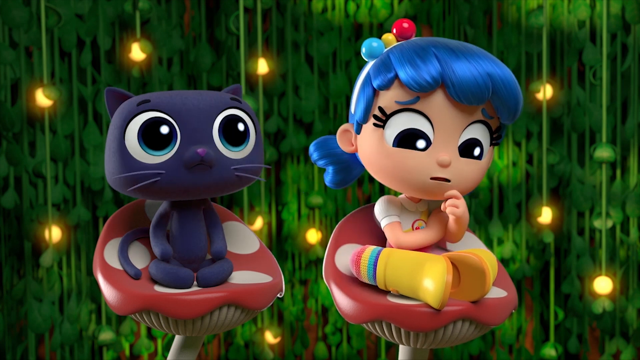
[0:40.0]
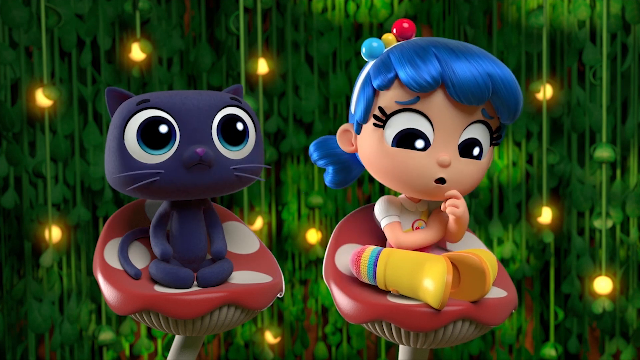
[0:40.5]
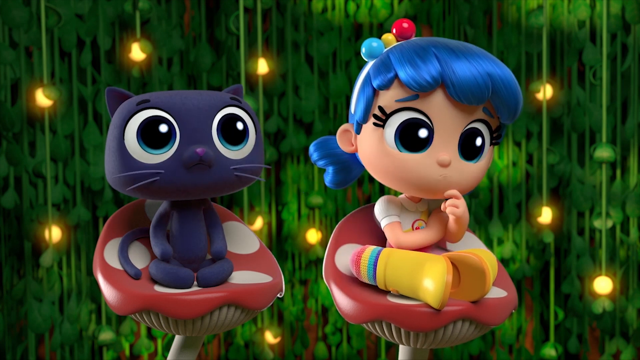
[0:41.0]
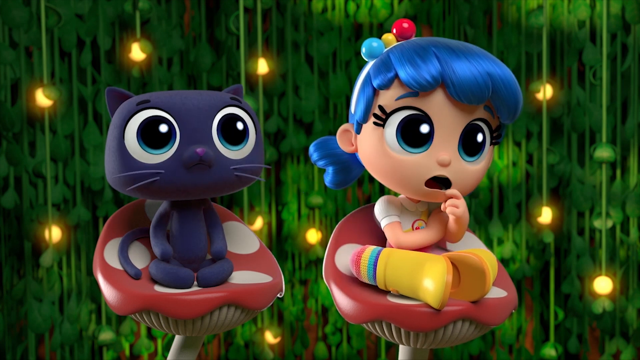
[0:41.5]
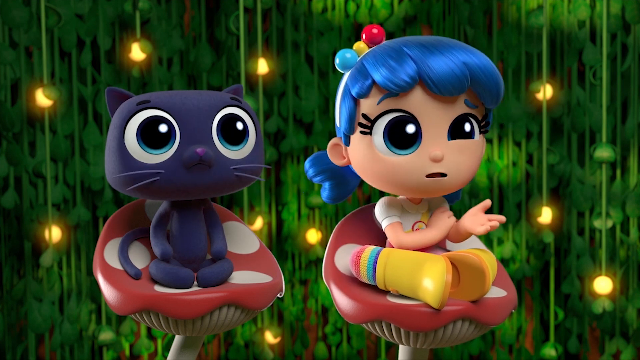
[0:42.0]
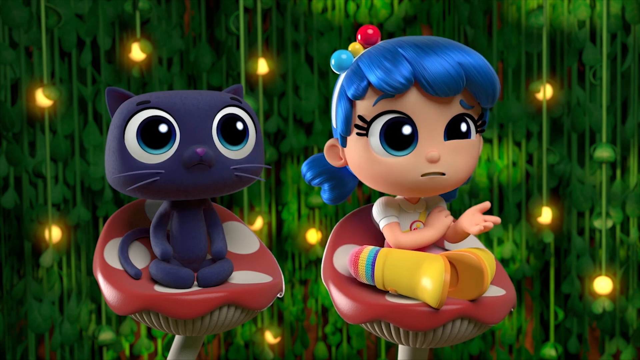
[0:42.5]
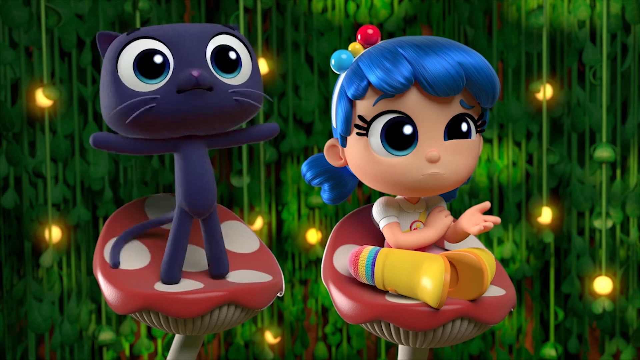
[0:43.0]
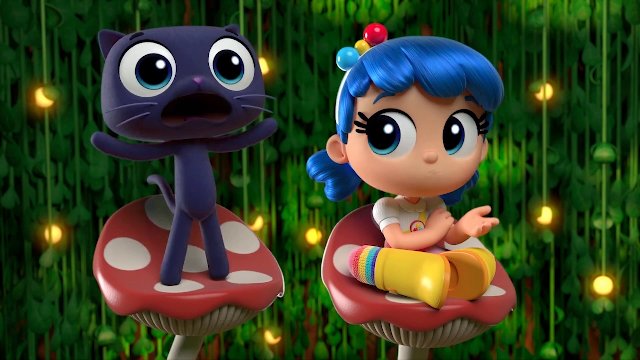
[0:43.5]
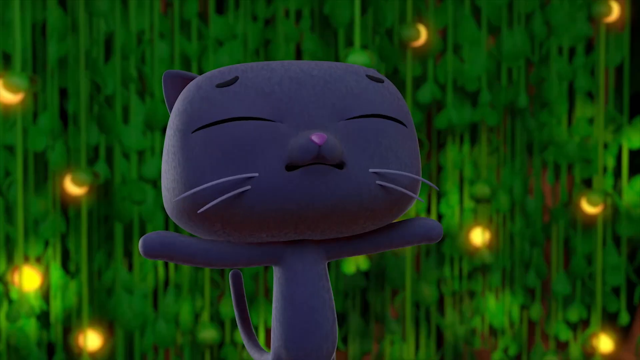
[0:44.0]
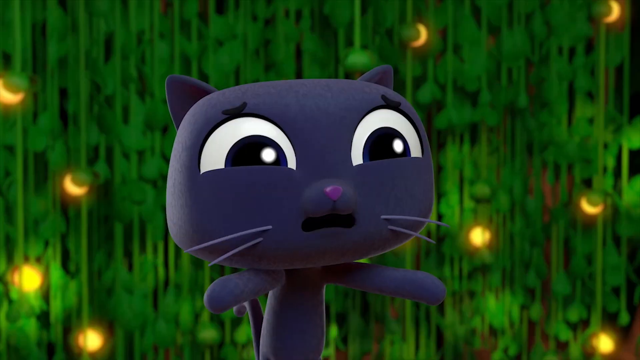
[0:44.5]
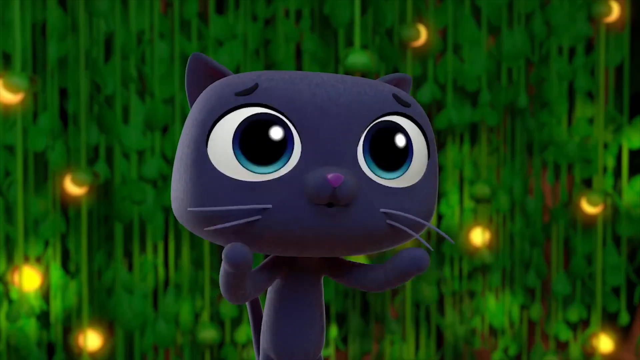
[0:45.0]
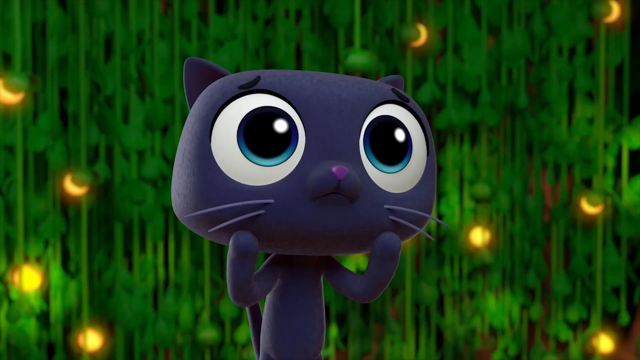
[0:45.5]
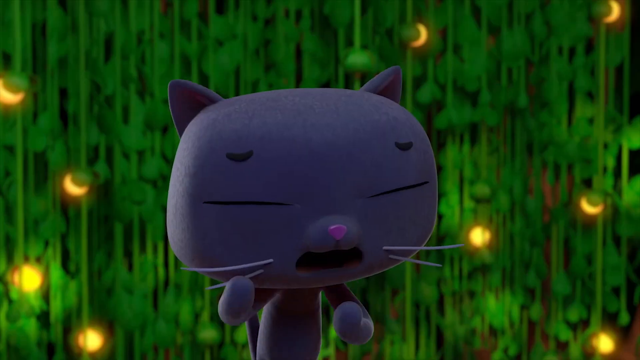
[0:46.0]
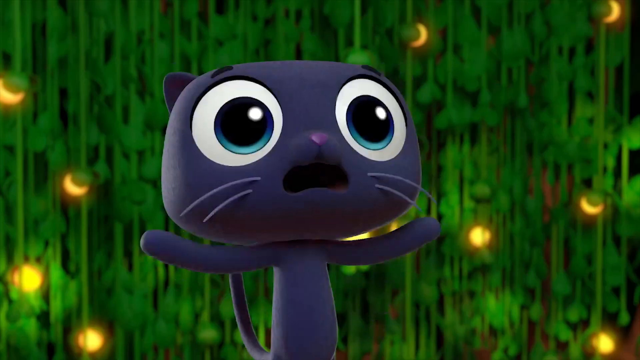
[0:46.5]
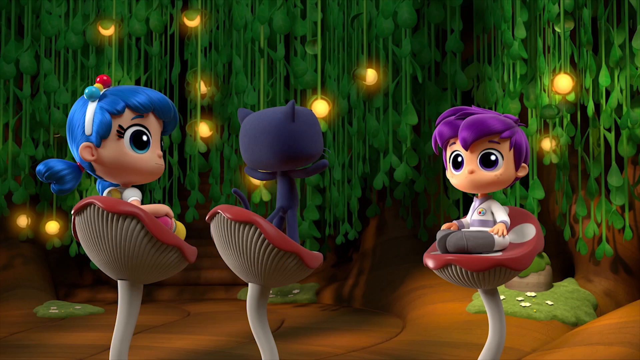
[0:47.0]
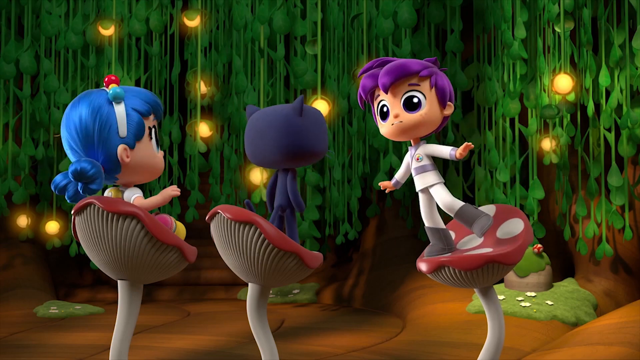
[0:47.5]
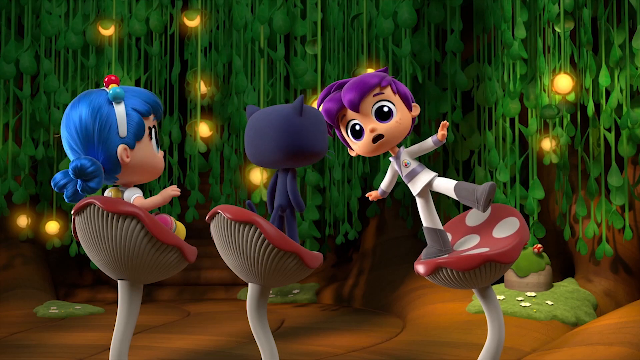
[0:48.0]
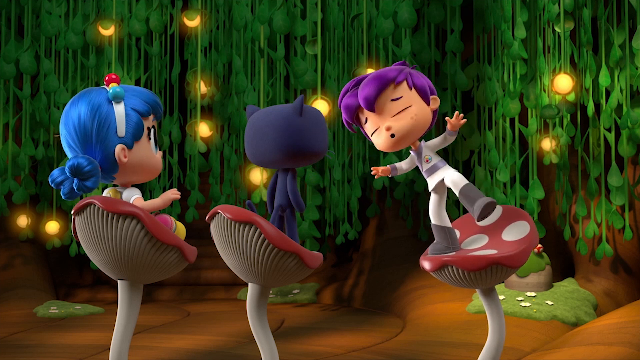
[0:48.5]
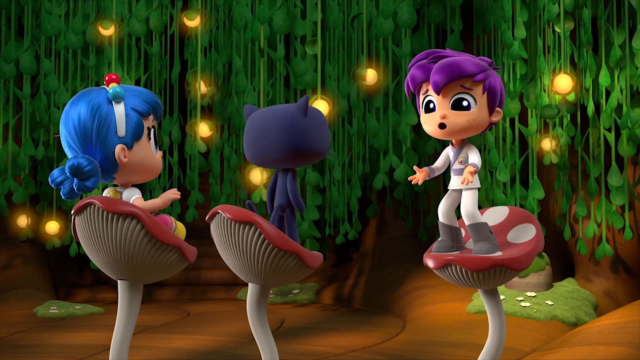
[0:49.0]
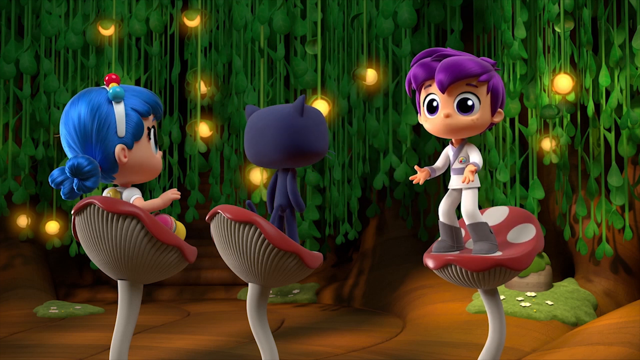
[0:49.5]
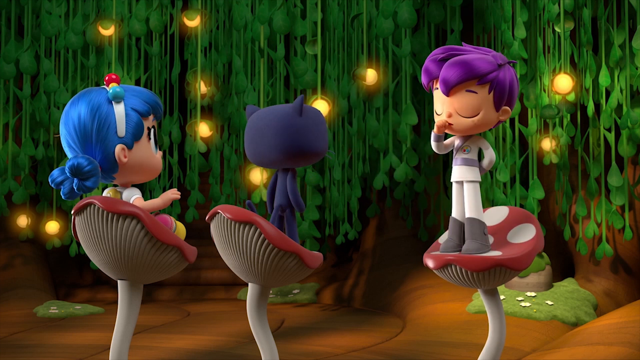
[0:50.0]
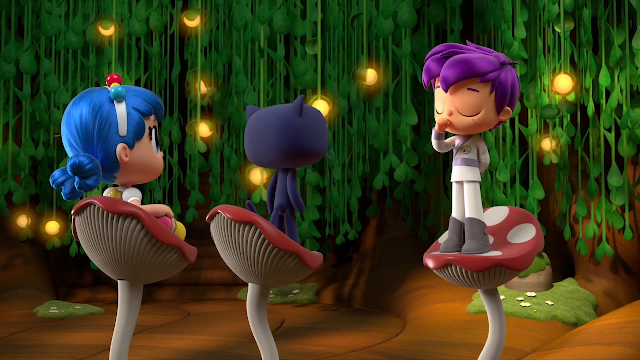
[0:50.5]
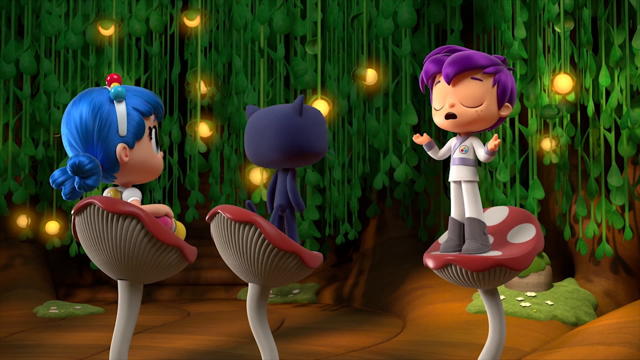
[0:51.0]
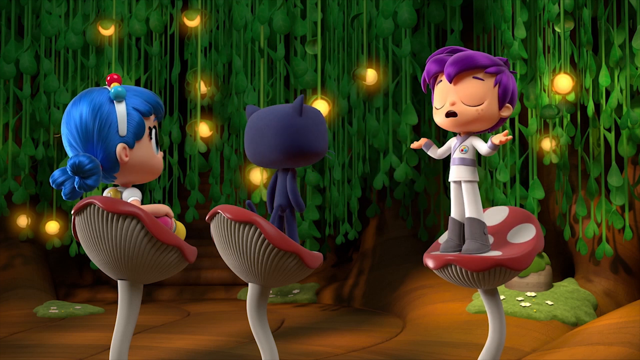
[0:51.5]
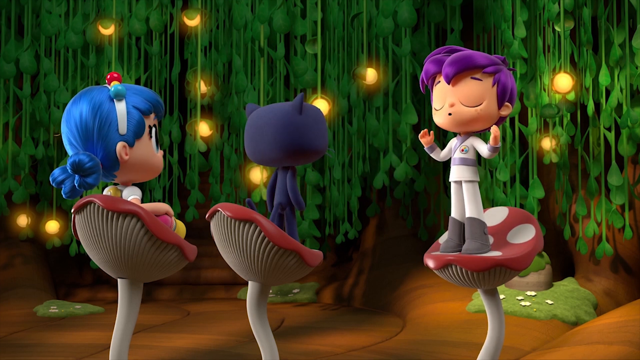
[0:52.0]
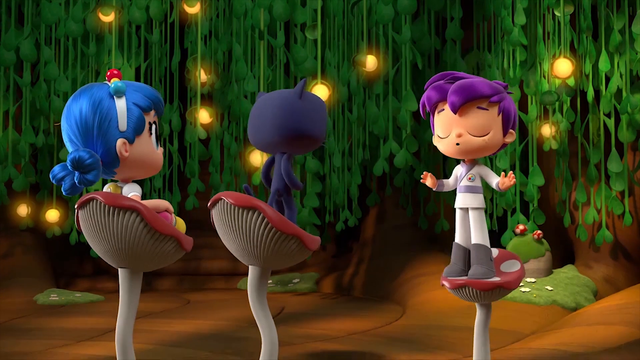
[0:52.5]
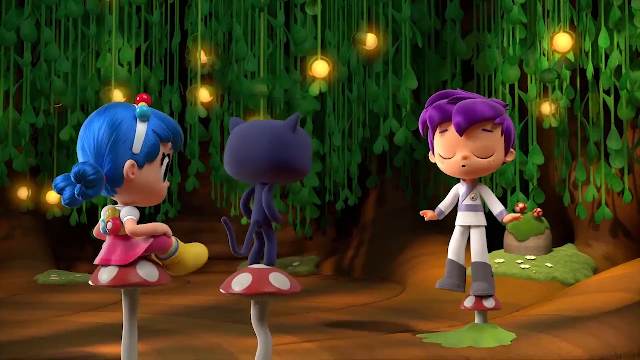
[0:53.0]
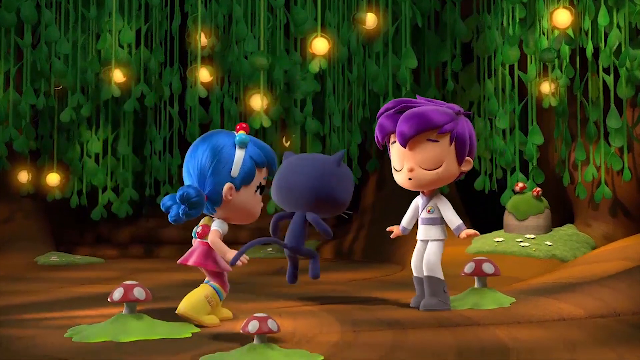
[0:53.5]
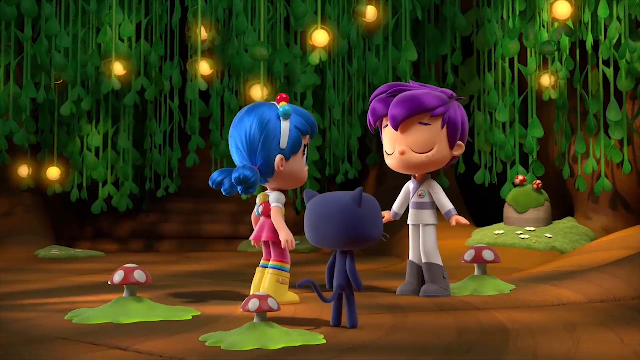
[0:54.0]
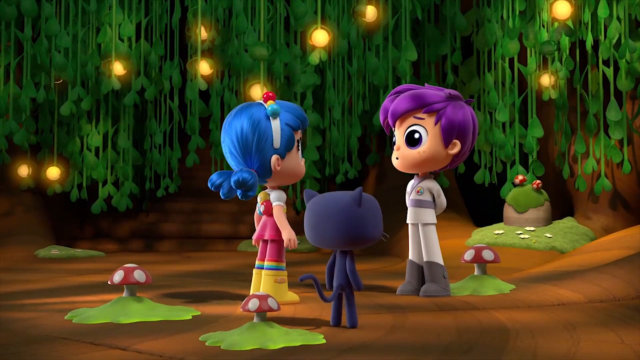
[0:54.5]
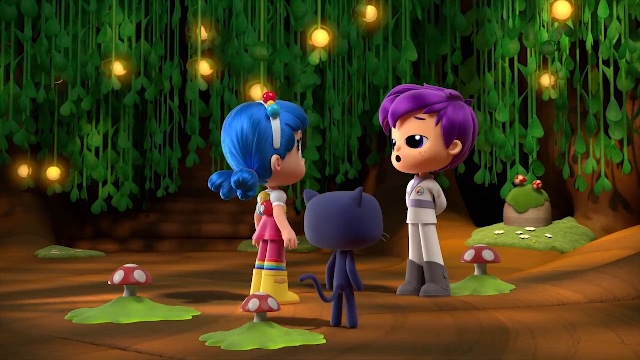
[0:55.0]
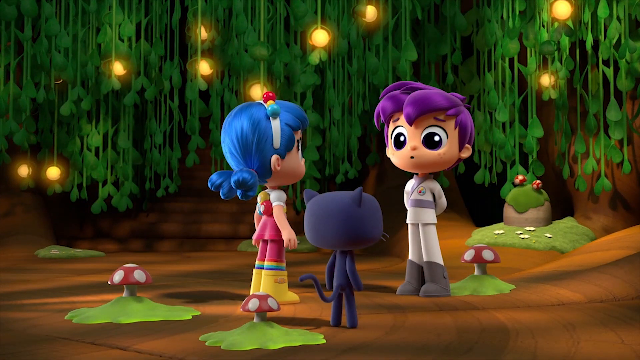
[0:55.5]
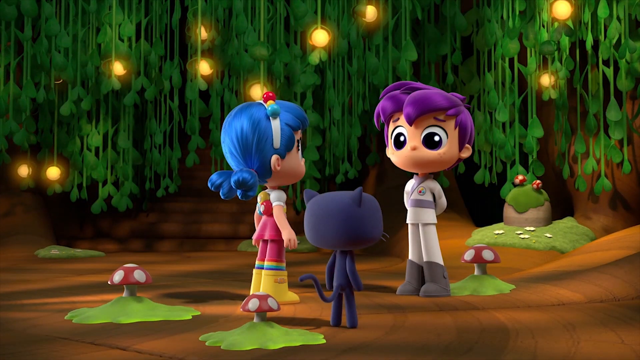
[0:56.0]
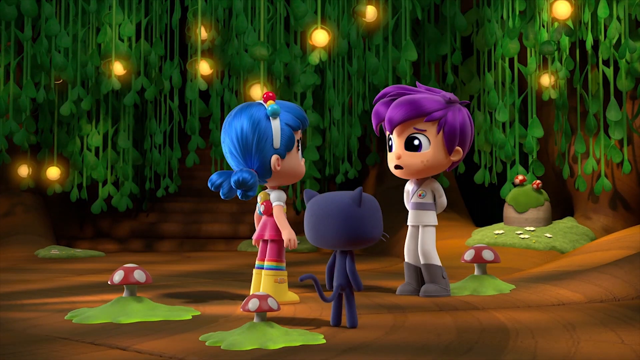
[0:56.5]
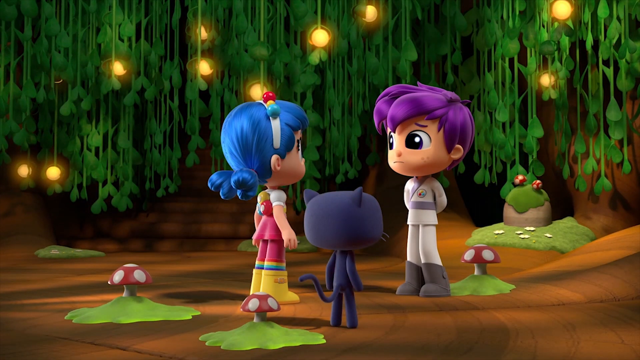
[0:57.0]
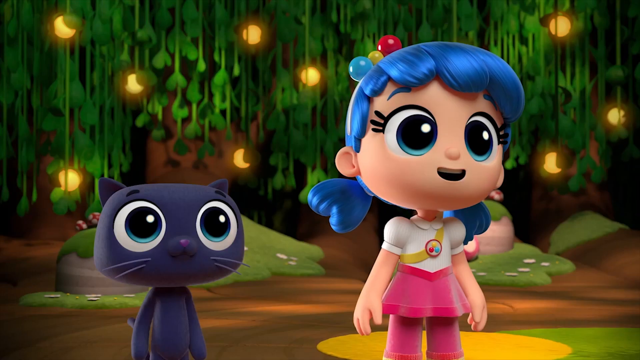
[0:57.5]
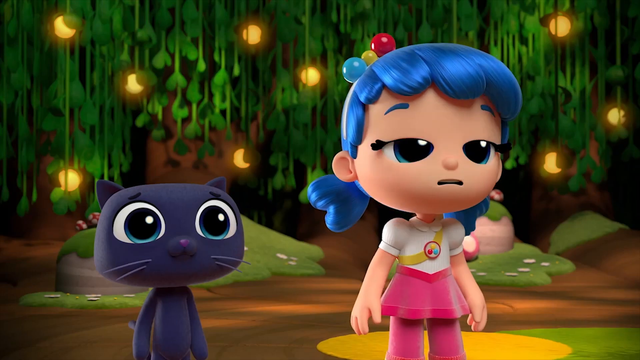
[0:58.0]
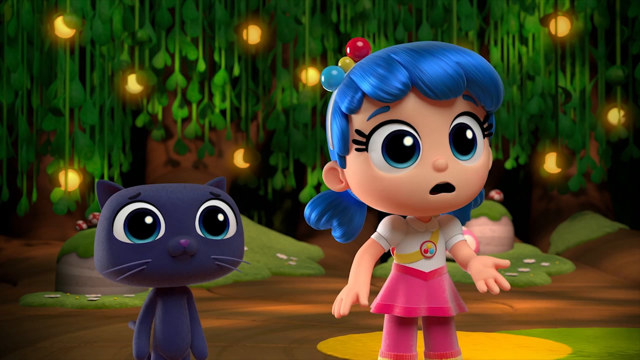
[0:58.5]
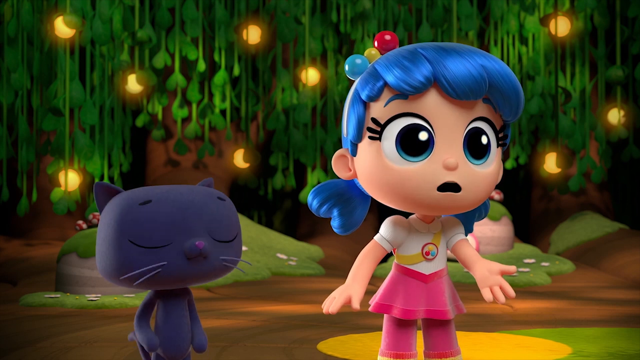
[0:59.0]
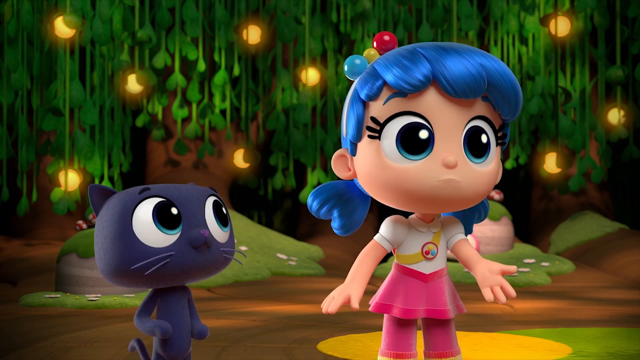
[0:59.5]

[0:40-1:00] The girl looks like she is almost sitting cross-legged, but with her knees down and her legs kind of flat, and her shoes pointing and almost touching; she does not have one leg over the other. She seems almost to be pondering, with her right hand over her left arm and a finger curled over. The cat suddenly kind of stands up, almost freaking out for a moment and stammering, and the purple-haired kid is kind of teetering back and forth. Then the boy seems to say "excuse me", kind of clears his throat and appears to start singing or something, closing his eyes, and the mushroom goes back down with all three of them; he apparently said some kind of command to make it go down. He looks back at both of them for a moment, and then the girl almost looks freaked out for a moment. All of them have huge eyes, and the cat and the girl have the same kind of blue eyes. The eyes of the cat and the people have little white circles, apparently showing the reflection of lights. In the back there are a couple of mushrooms of the same color on a small hill or slope, and a couple of little white flowers in the grass.